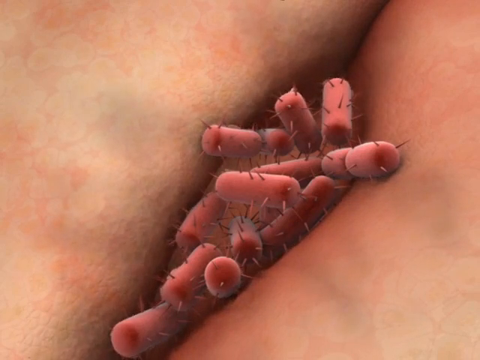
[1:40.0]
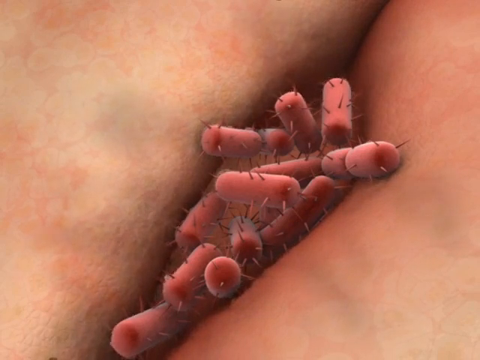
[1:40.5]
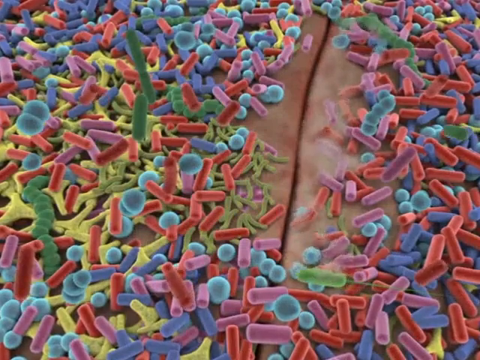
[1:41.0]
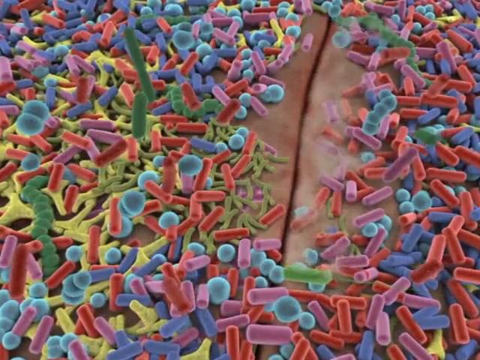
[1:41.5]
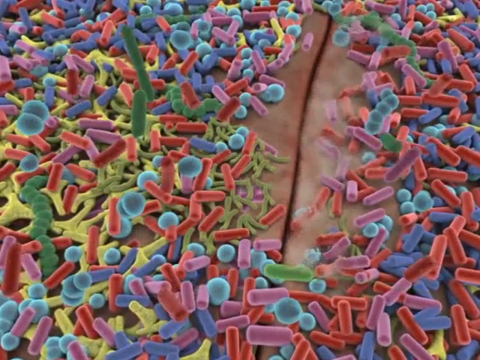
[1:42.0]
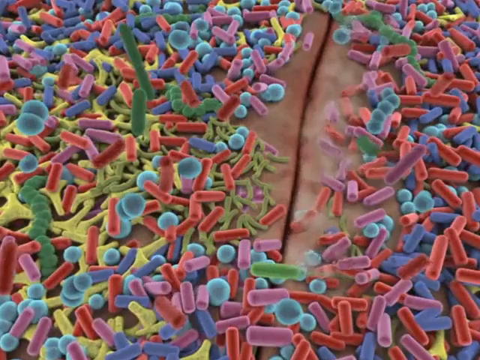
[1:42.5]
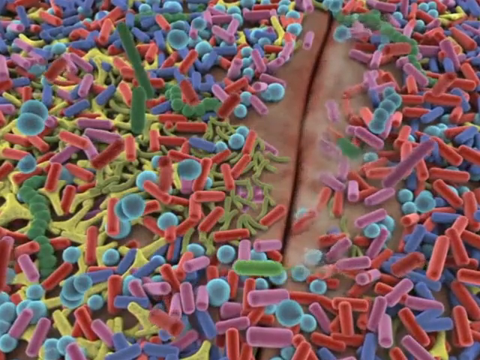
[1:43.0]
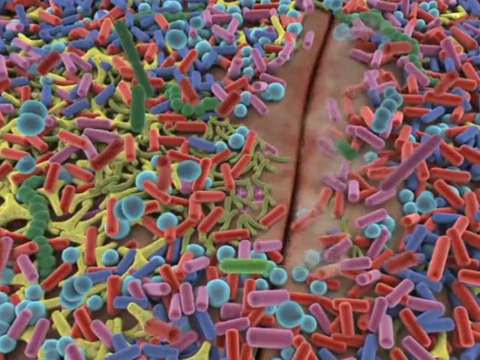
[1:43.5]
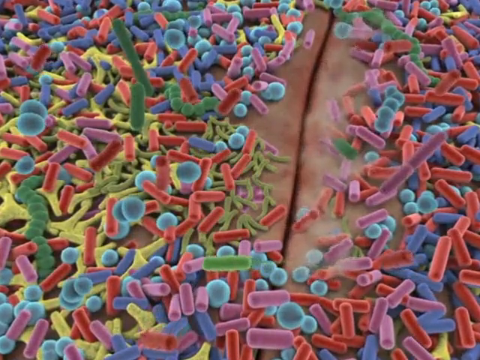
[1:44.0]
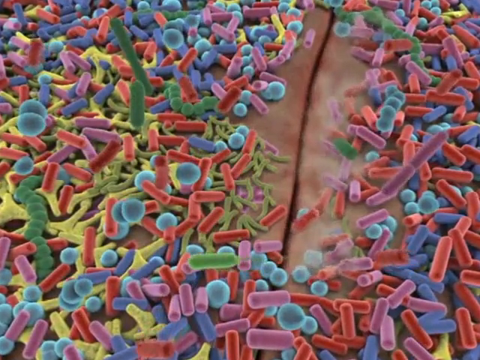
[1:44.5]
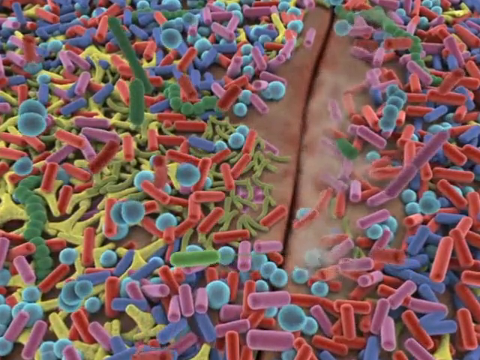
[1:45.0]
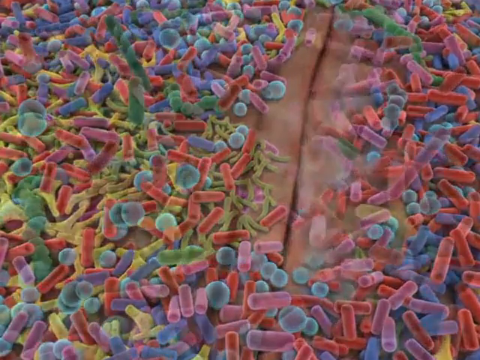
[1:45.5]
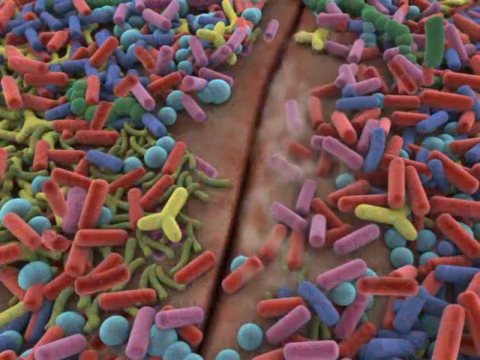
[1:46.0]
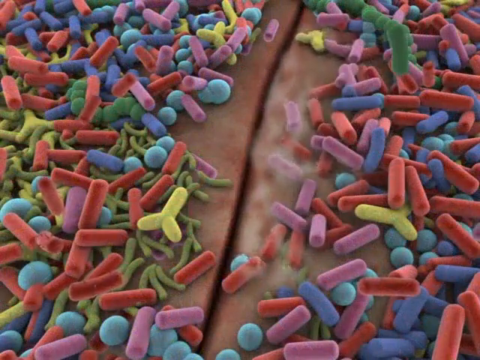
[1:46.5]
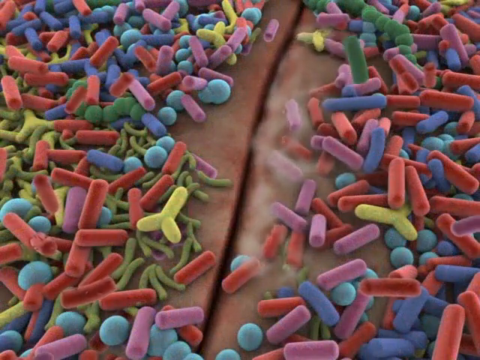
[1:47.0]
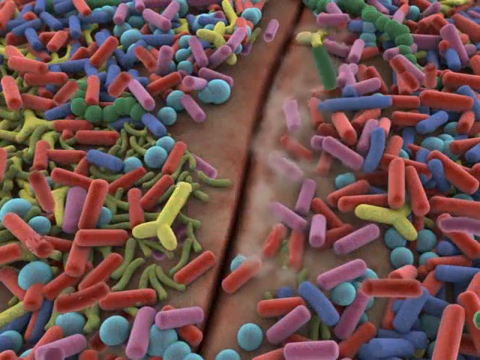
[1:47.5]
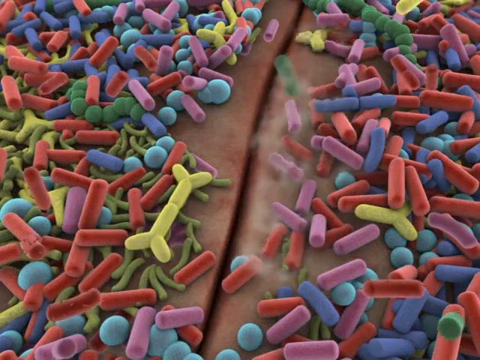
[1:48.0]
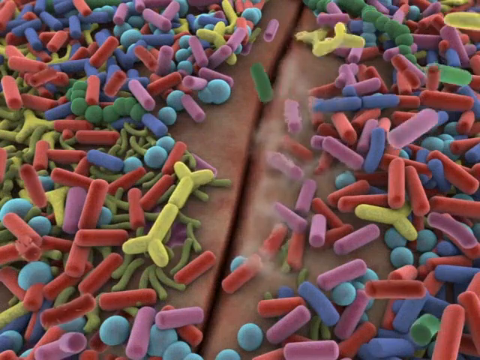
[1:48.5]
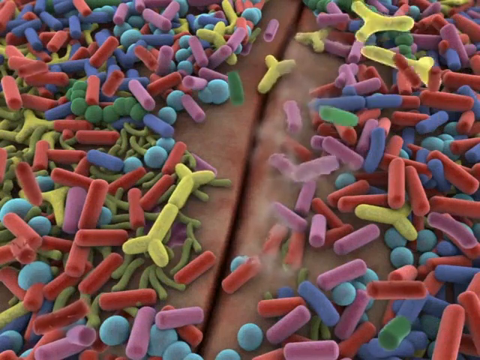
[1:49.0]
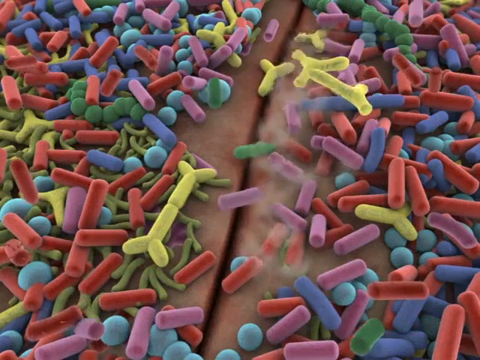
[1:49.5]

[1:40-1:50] The scene changes to very colorful probiotics, purple, red, yellow and green, clustered together. In the middle, slightly to the right, there is what looks like a crack. The view zooms in on the crack, which is now in the middle, and a very cloudy mist, almost like white fog, comes out of the crack or tear, going downward vertically in the center.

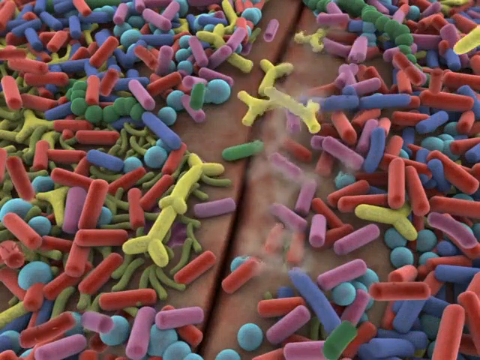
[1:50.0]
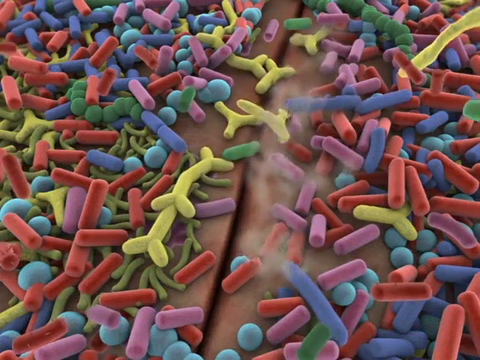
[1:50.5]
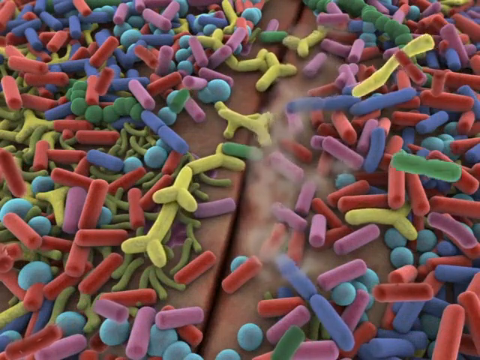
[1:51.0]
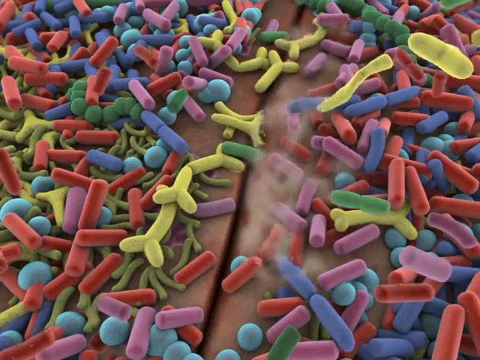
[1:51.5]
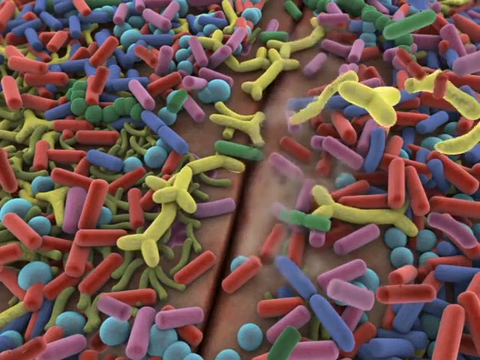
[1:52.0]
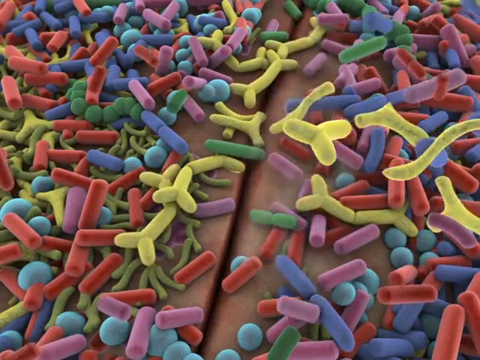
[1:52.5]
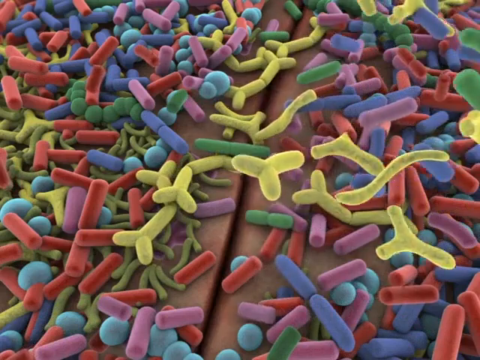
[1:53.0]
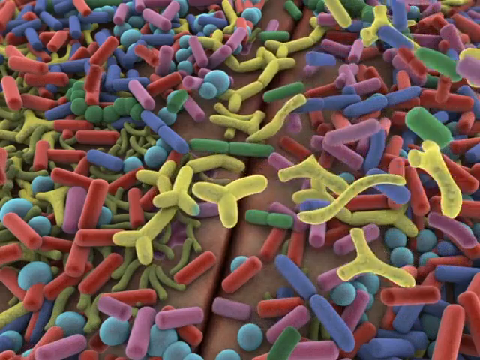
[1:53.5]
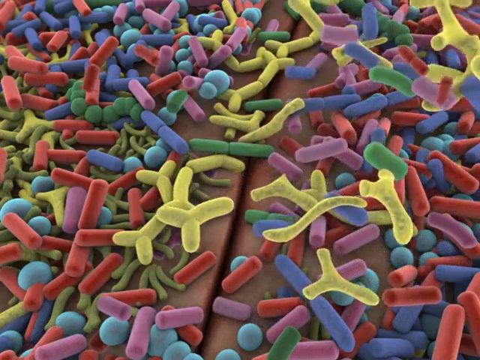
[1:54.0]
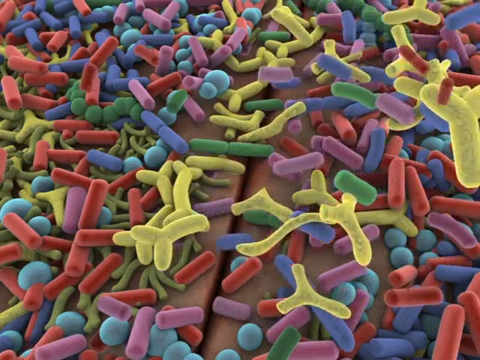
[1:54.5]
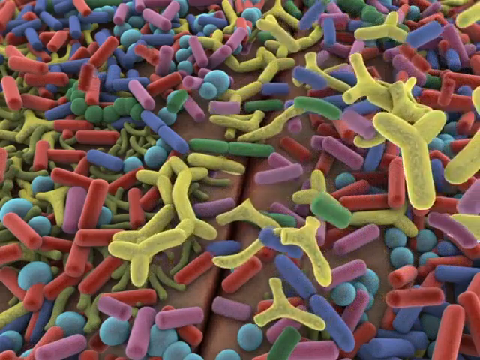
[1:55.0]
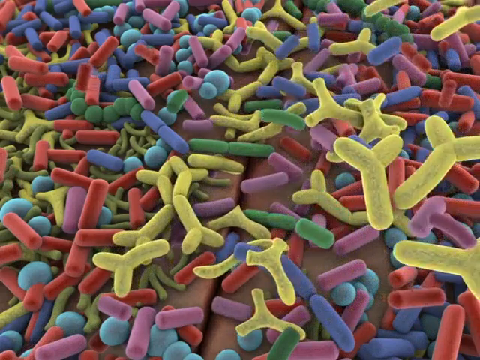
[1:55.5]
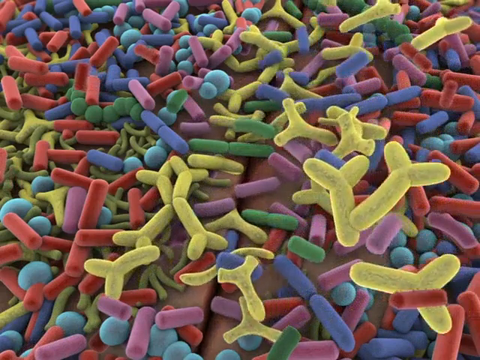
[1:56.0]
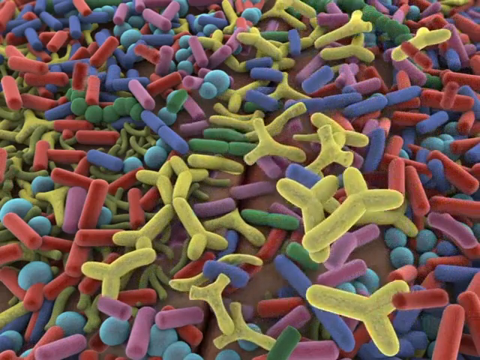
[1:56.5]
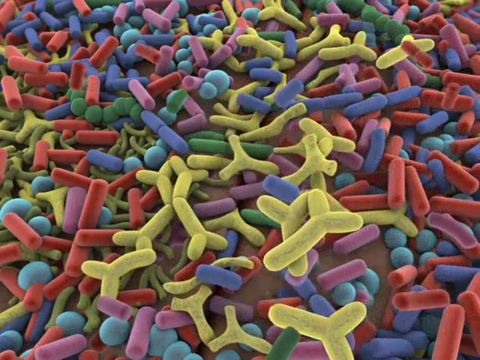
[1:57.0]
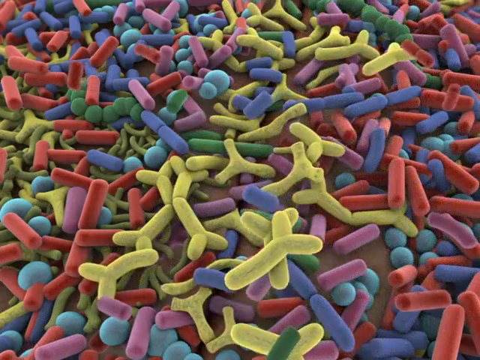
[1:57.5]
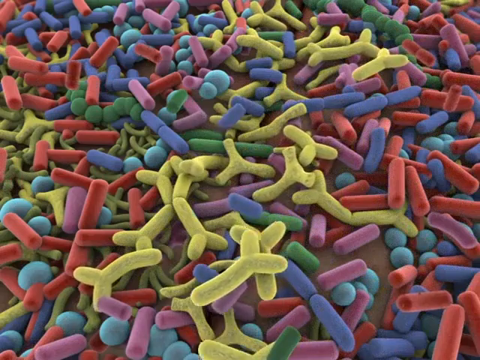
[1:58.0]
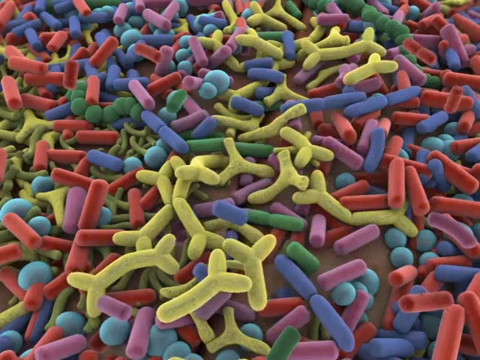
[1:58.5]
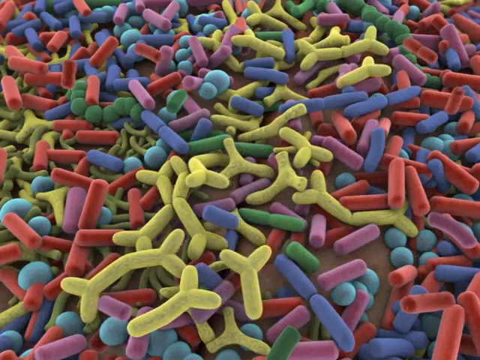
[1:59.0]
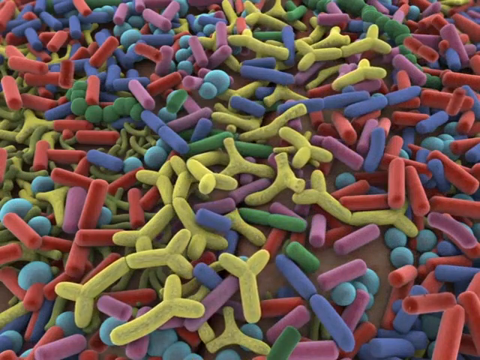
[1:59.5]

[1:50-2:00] Some of the probiotics move around, and many more come down from the right side. They seal up the crack or tear in the middle, falling over it and covering it until it can no longer be seen. With all these probiotics from the right covering it, the fog or mist that was coming out of the crack disappears, leaving no fog and no visible crack.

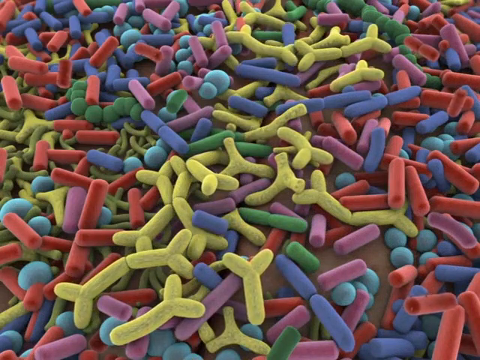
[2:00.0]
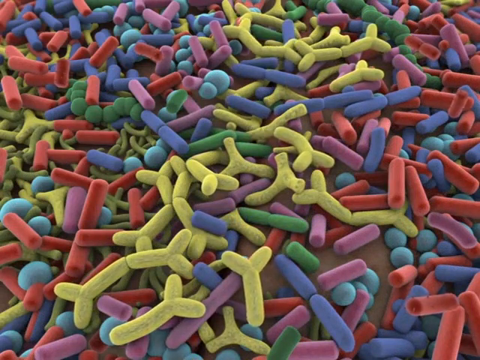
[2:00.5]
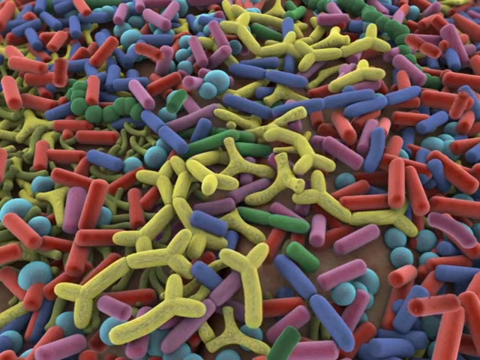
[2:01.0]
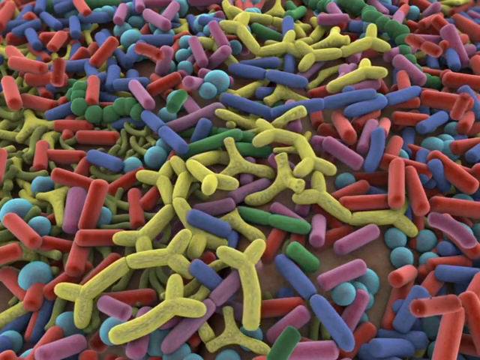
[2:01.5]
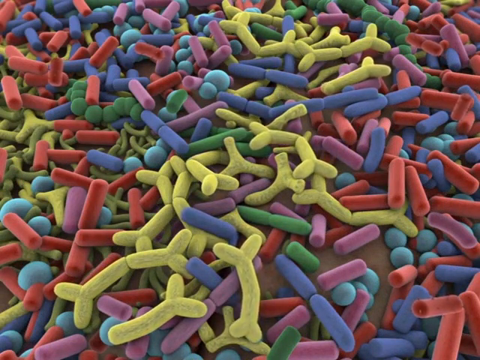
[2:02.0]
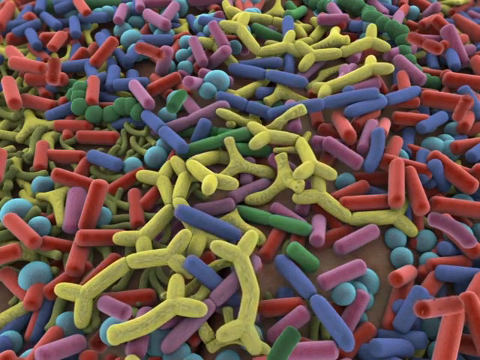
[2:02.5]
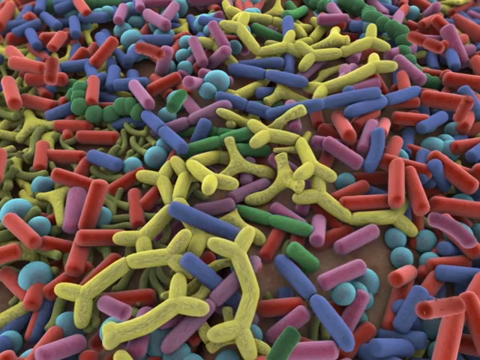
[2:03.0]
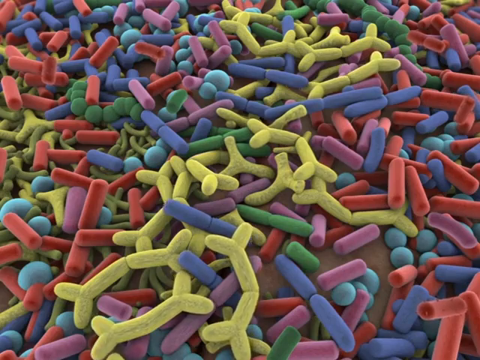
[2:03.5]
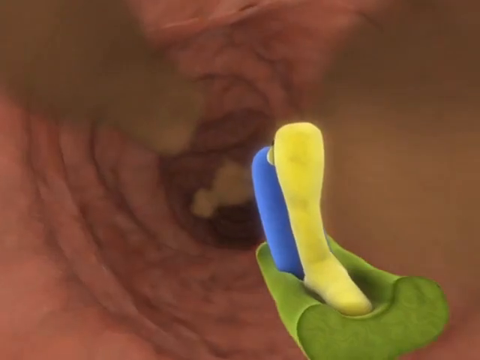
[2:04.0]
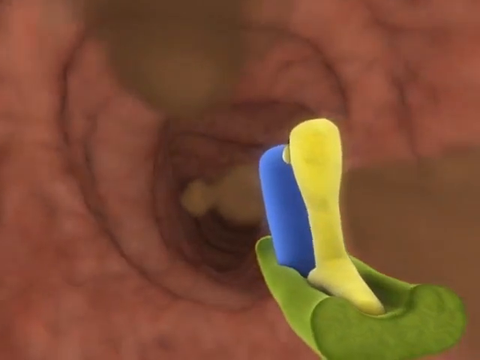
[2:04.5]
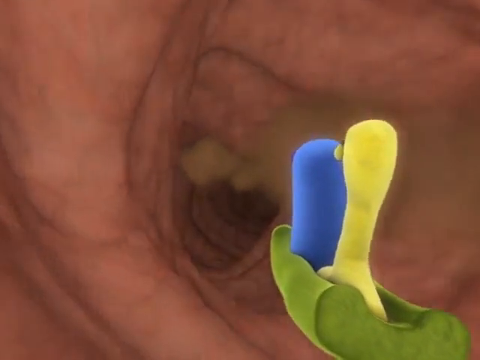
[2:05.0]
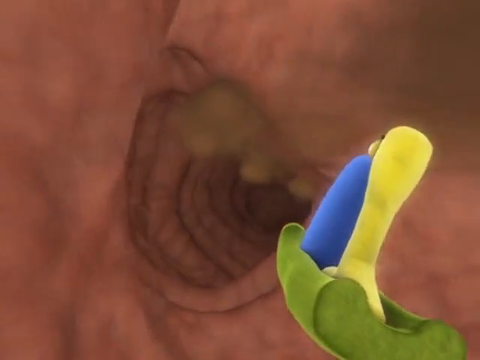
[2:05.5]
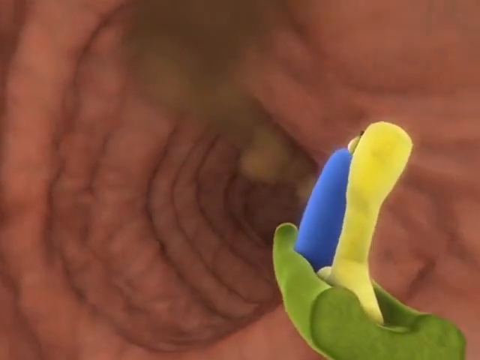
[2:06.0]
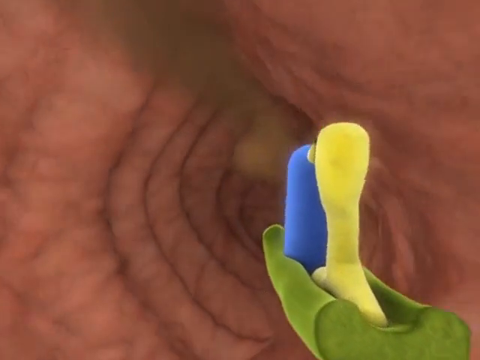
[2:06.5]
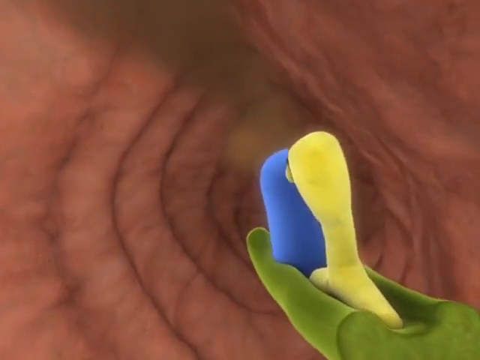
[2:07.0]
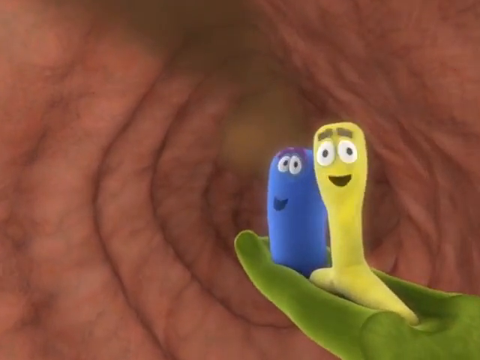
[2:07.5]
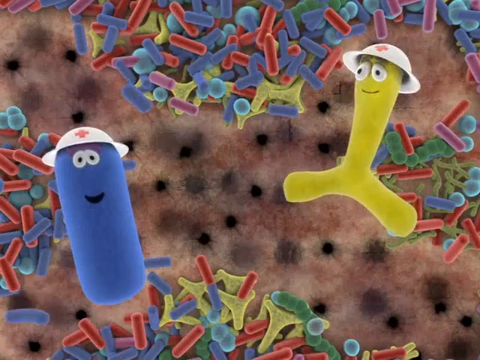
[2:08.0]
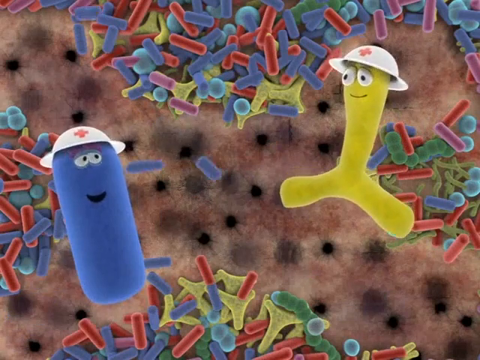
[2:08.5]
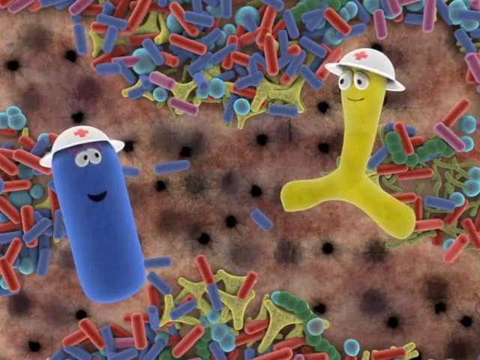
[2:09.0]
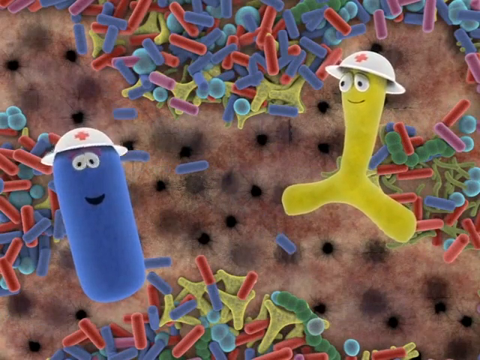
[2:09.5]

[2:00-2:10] With the tear or crack covered by the probiotics, a different scene shows the blue and yellow probiotics on the right side, still traveling through a tube that looks like the intestines, with light pink walls. The probiotics turn and look back toward the viewer, the blue one on the left and the yellow one on the right. Both wear white helmets with red crosses in the center. Behind them are other colorful groups of probiotics.